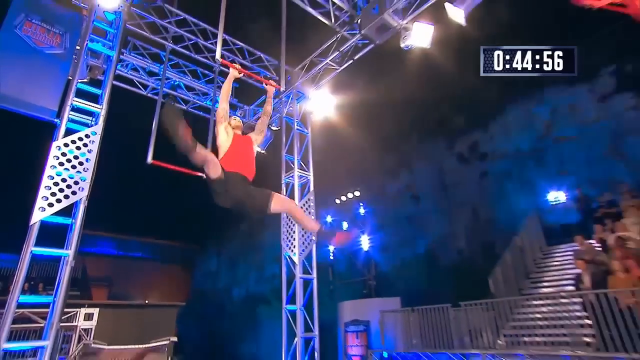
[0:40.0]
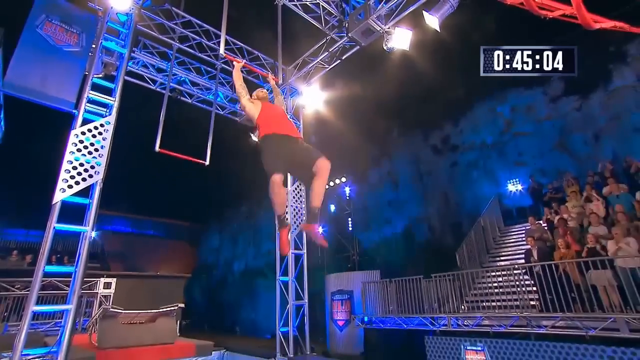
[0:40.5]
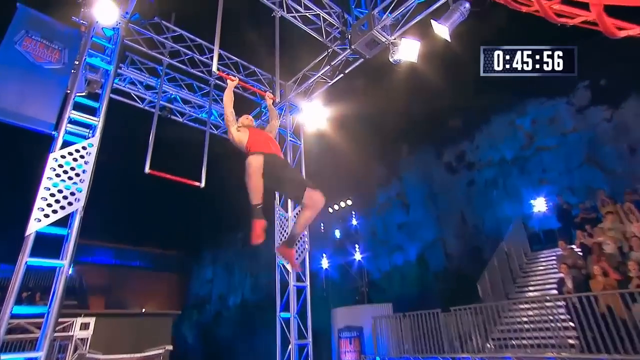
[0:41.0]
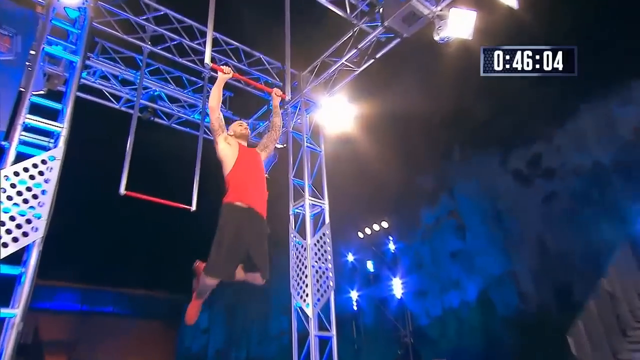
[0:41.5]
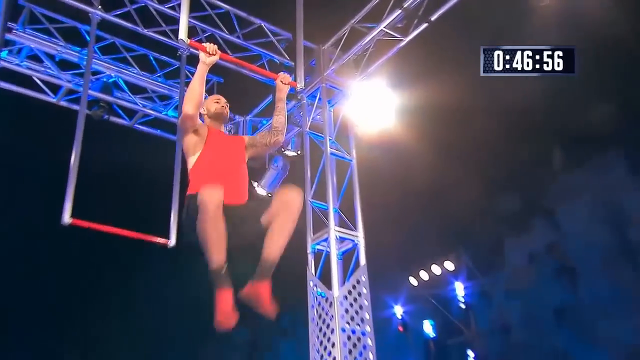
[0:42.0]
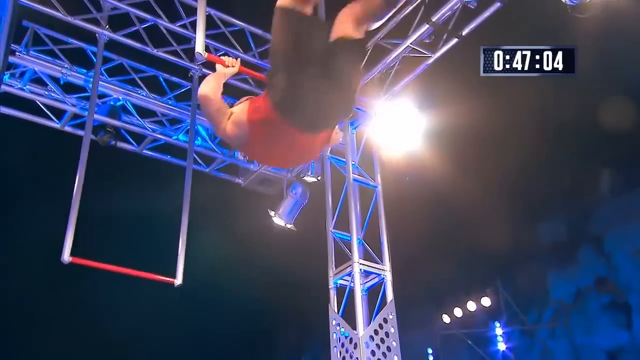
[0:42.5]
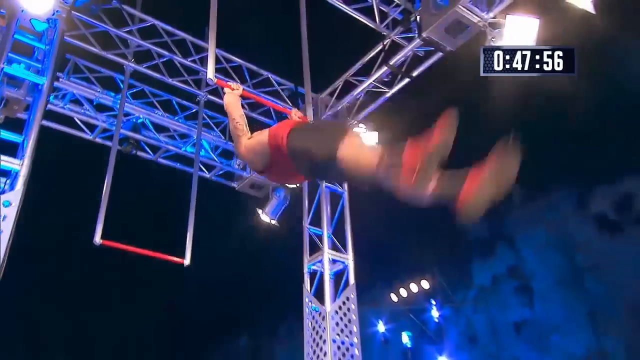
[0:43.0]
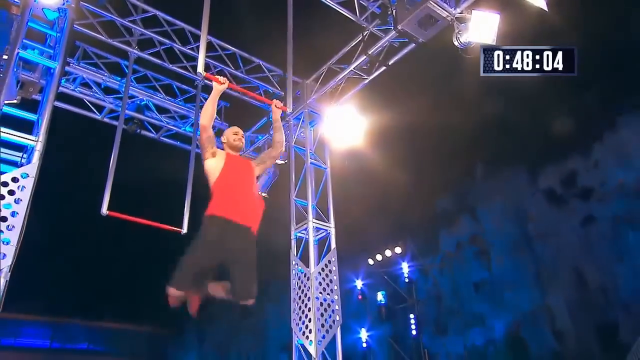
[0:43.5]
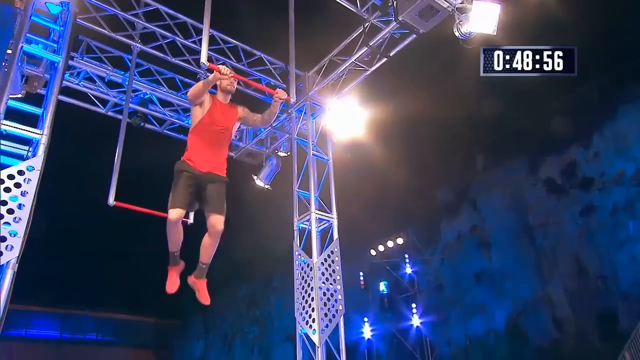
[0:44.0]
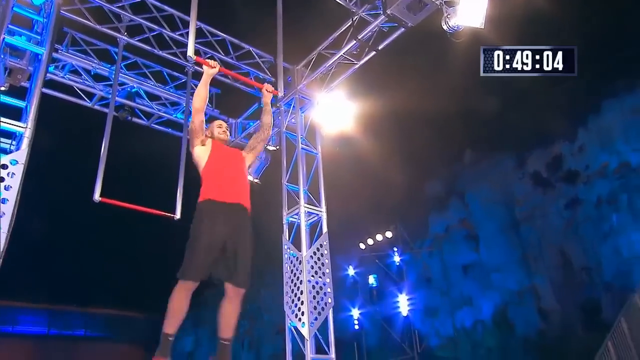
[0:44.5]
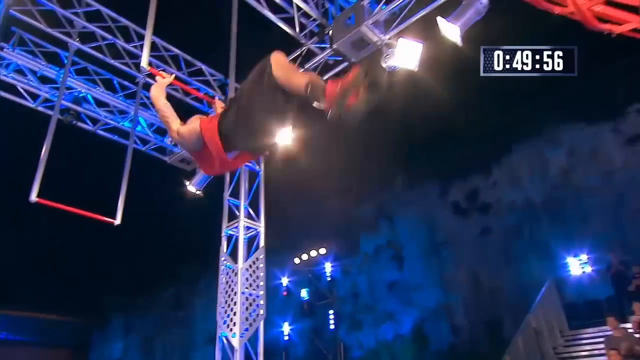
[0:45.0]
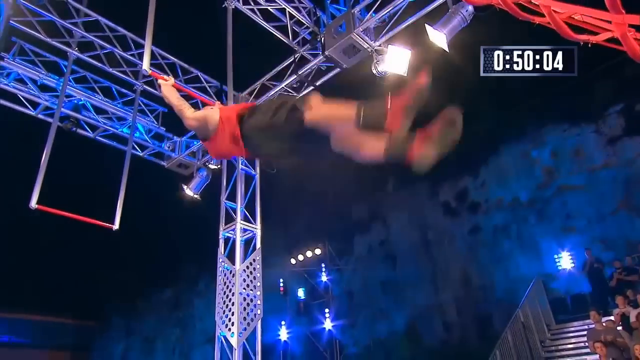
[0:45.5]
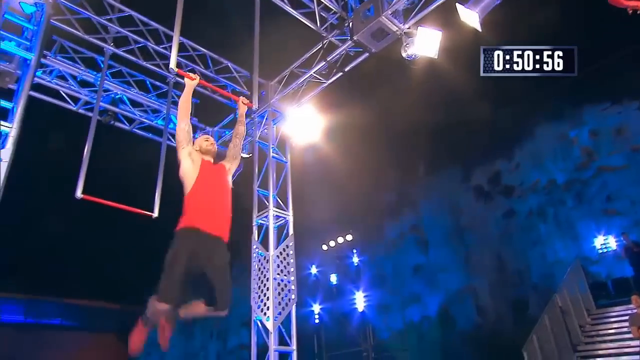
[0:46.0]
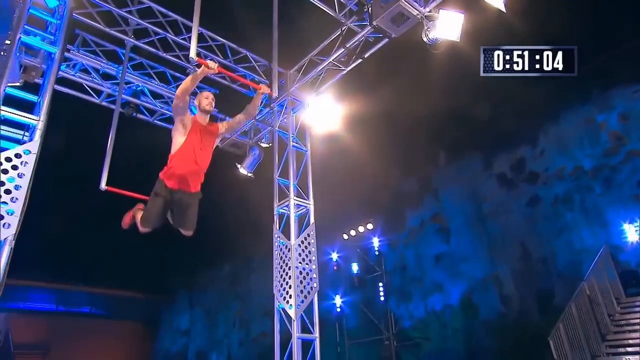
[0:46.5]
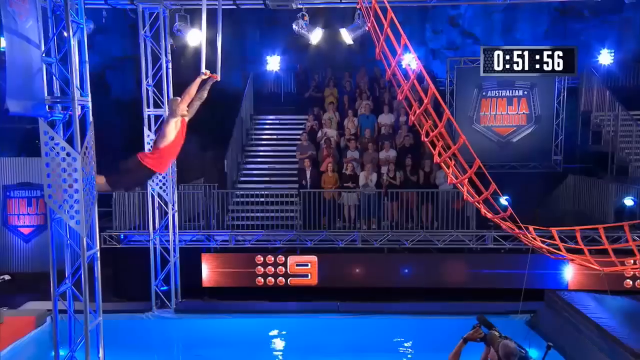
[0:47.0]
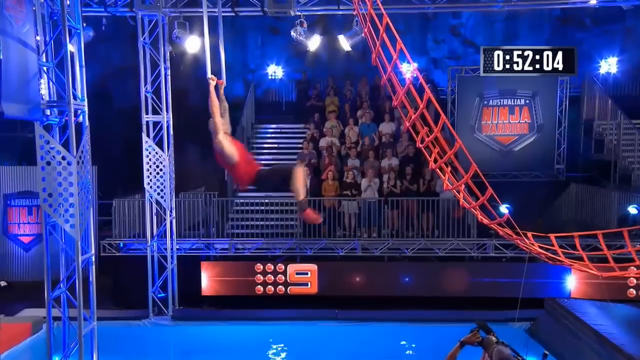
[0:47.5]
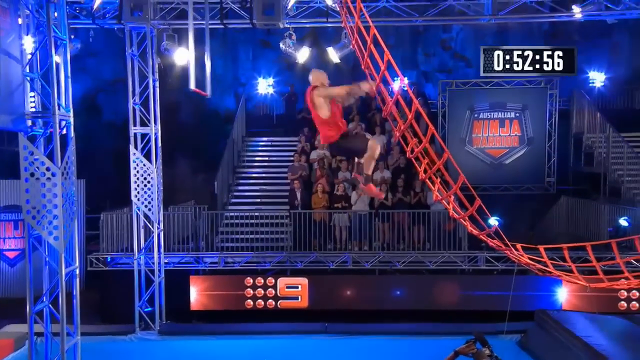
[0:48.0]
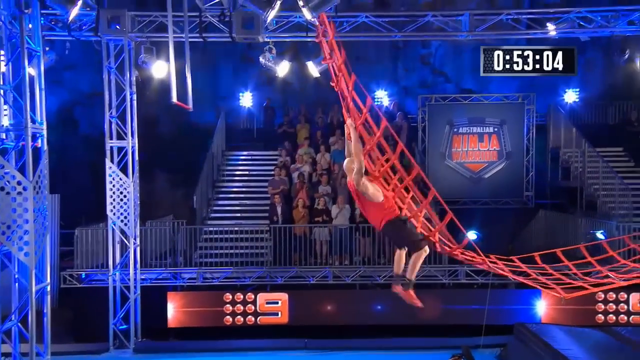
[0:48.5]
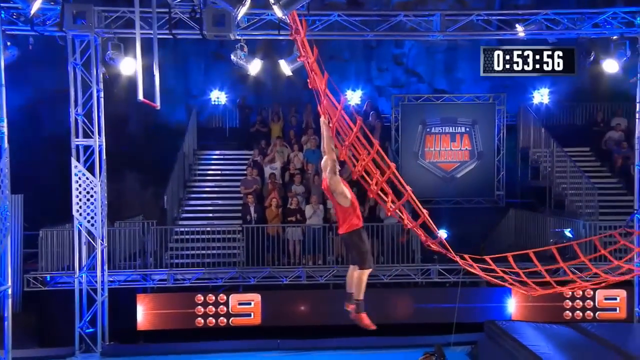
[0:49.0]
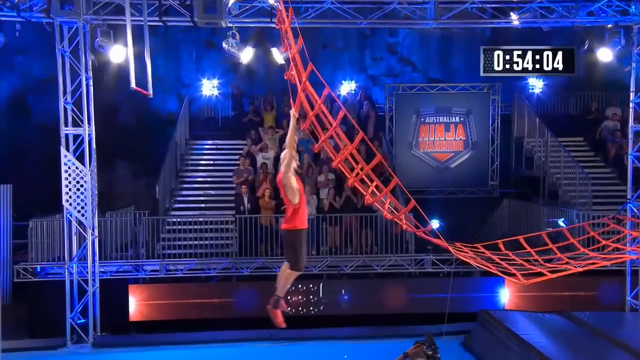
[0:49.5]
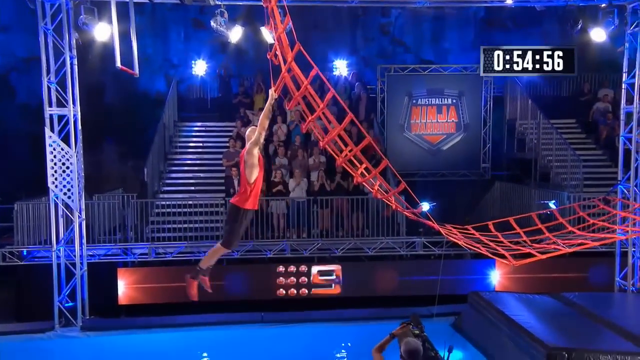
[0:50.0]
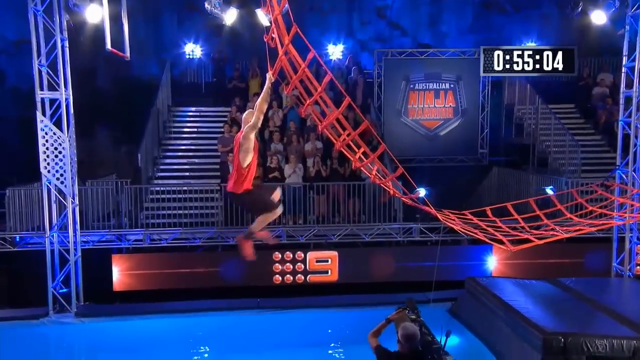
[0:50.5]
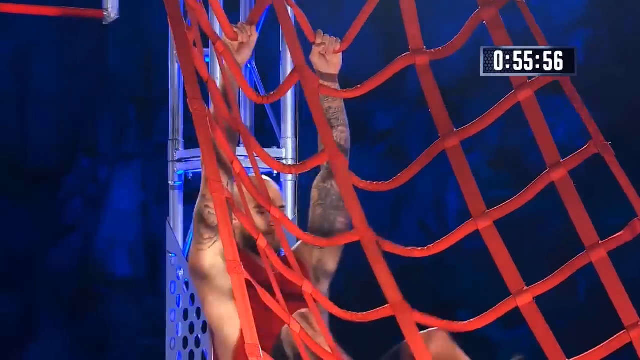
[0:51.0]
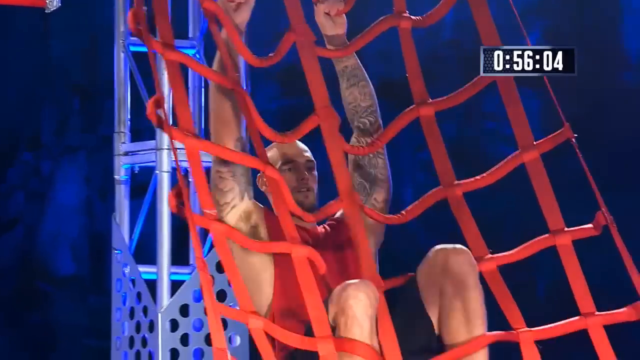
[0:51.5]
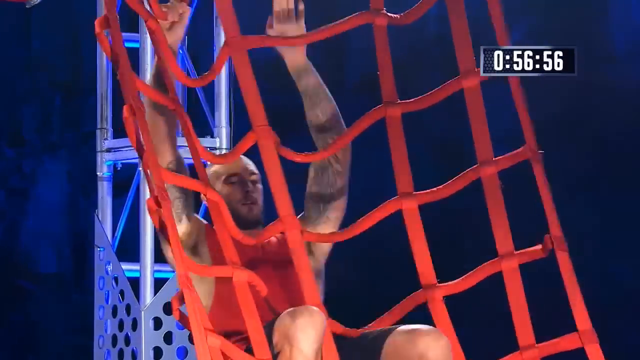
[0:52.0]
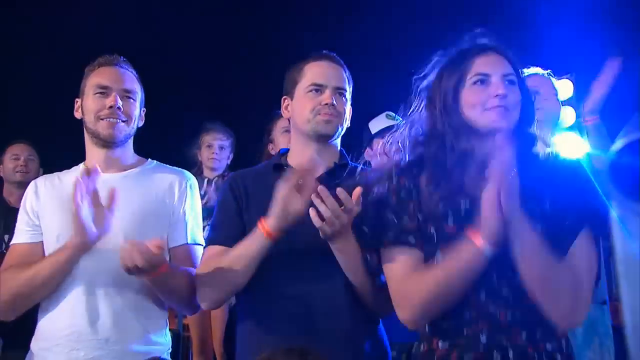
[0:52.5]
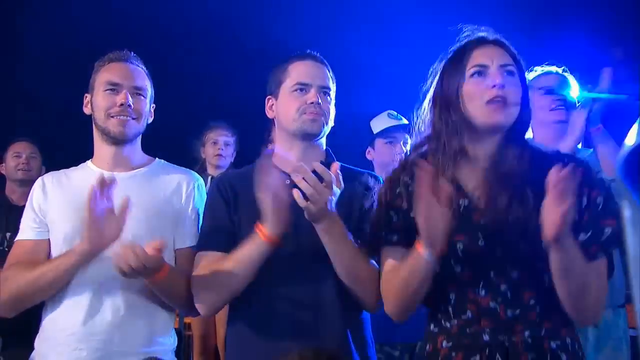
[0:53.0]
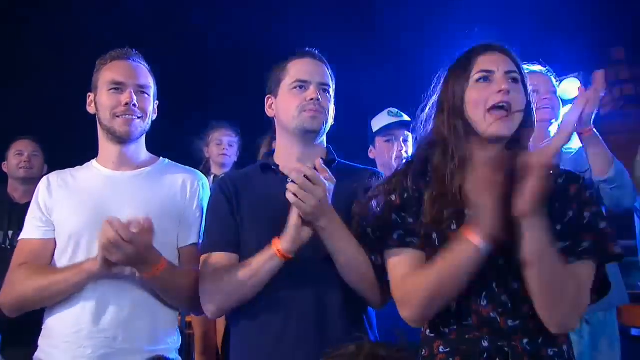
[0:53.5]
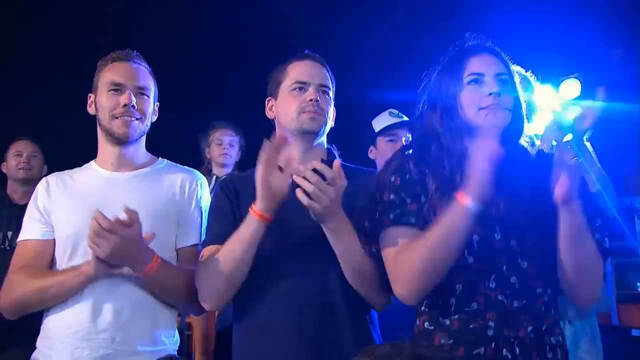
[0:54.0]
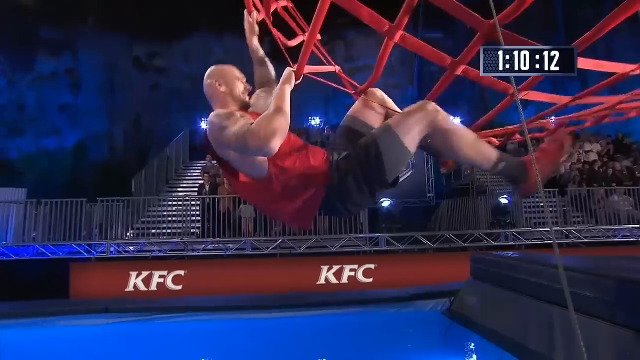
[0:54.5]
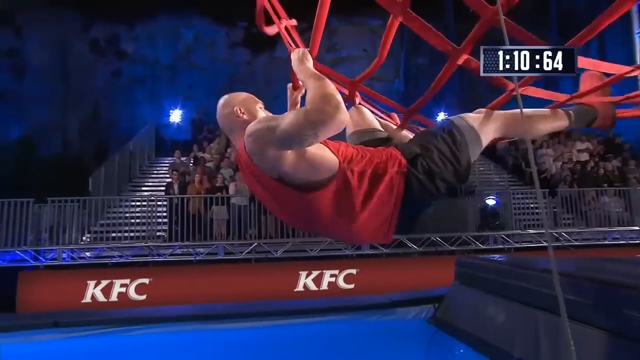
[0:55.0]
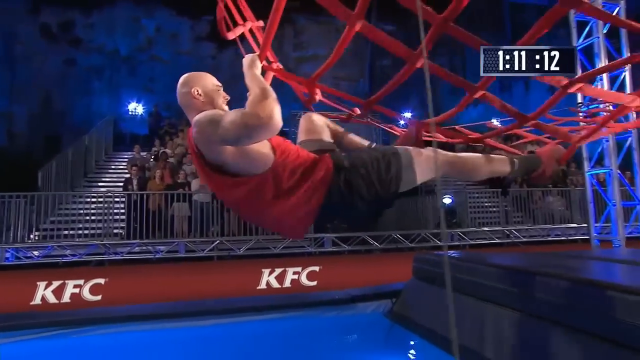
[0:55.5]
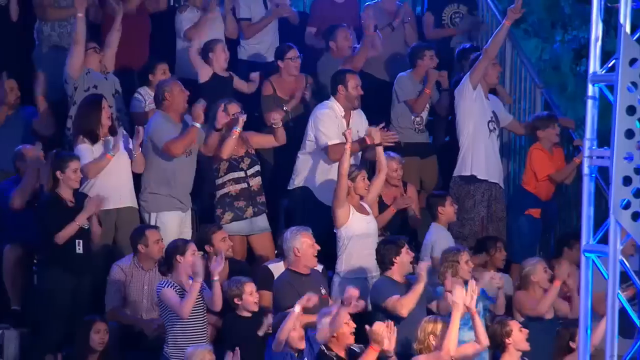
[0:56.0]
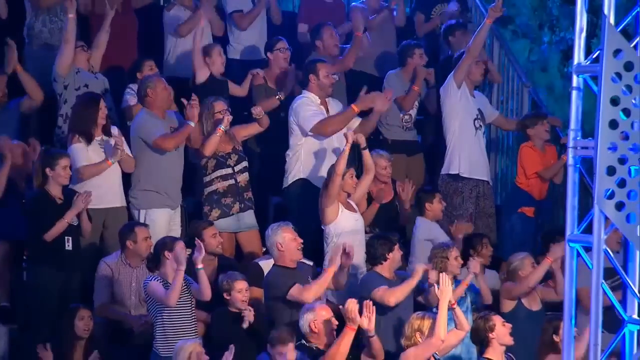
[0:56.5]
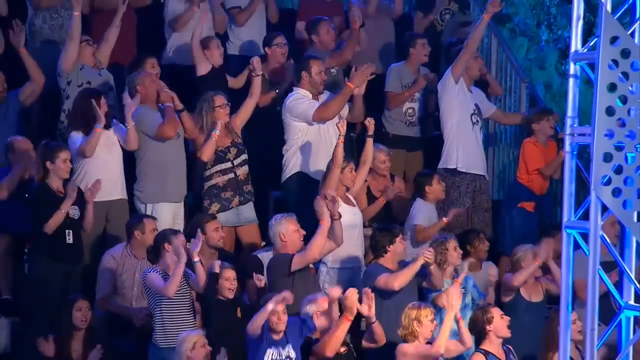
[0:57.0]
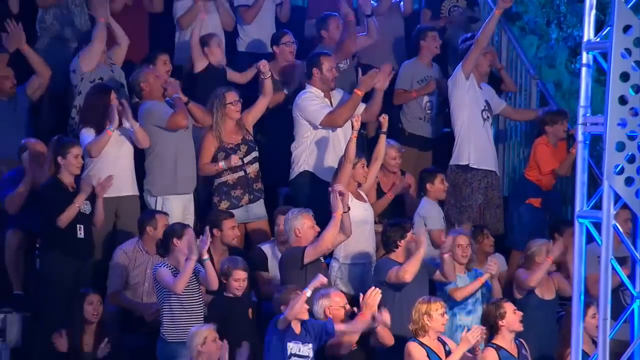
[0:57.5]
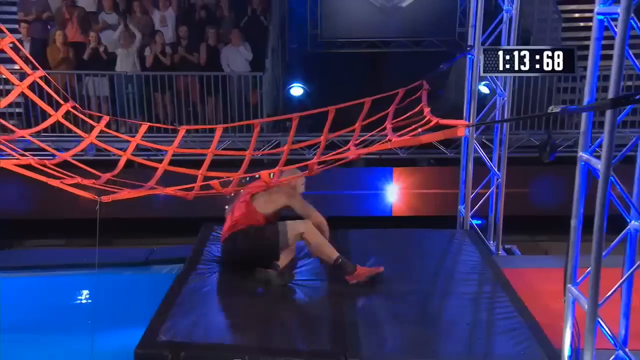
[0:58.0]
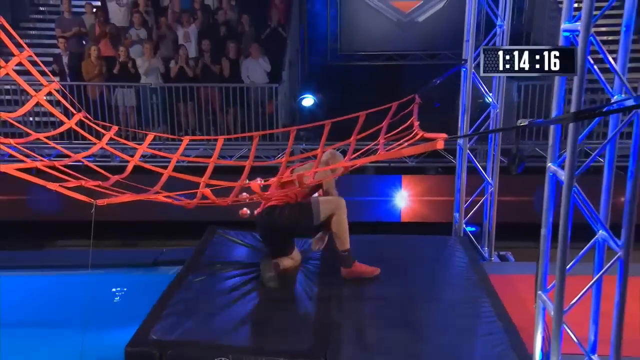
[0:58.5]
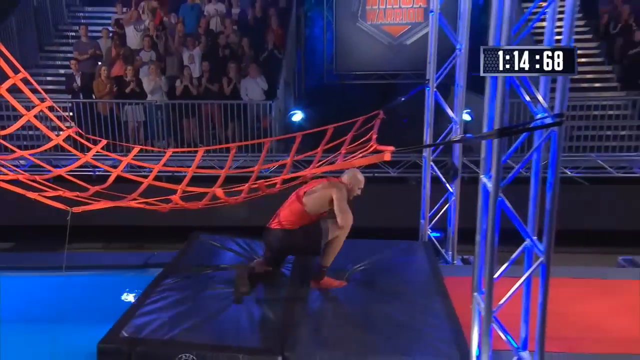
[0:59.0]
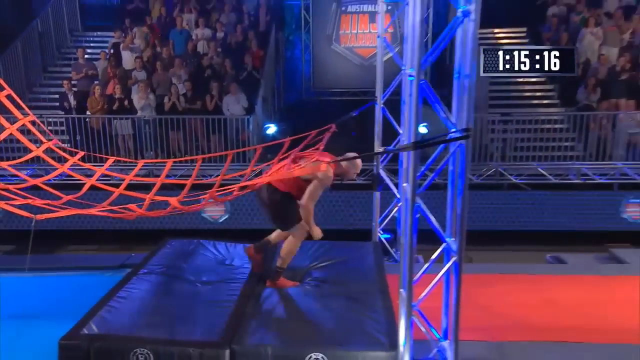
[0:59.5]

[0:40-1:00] The participant jumps from the metal, holding a red mesh, and tries to get to the other end, apparently trying to beat the time. People cheer and applaud him. There is a mounted stage with good lighting that the participants perform on, and there are signposts showing KFC, apparently the sponsors. He moves to hold the net and walks, more like crawls, as the people cheer.